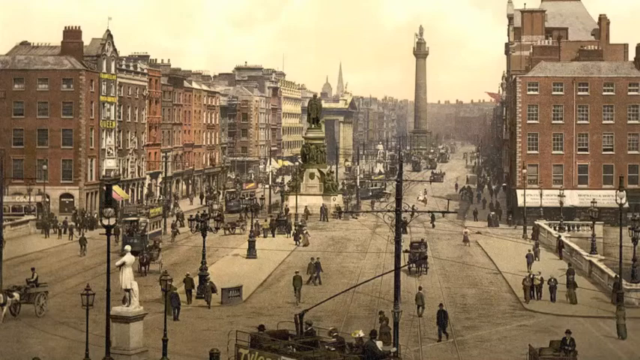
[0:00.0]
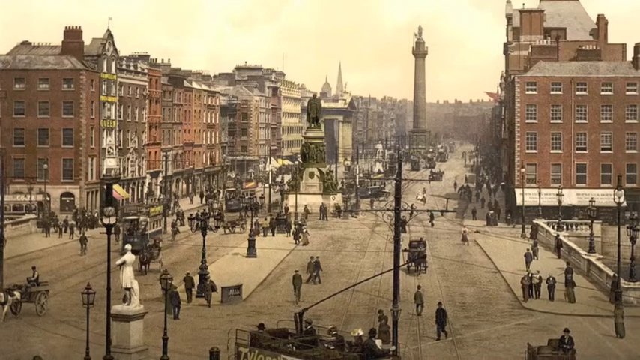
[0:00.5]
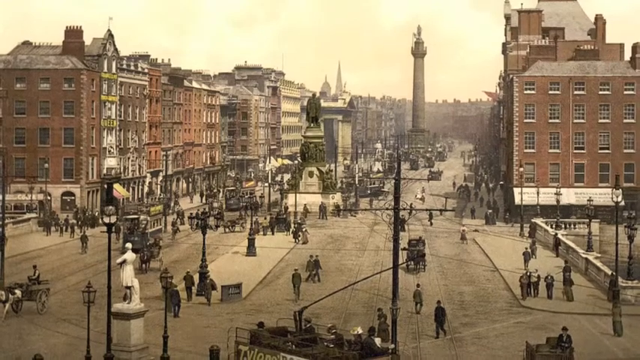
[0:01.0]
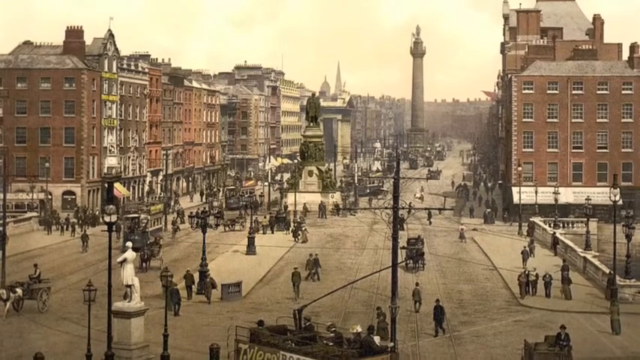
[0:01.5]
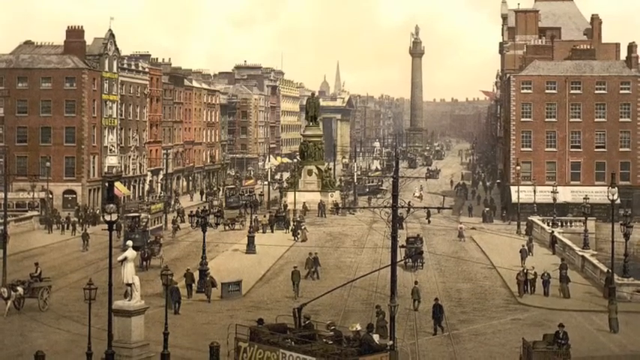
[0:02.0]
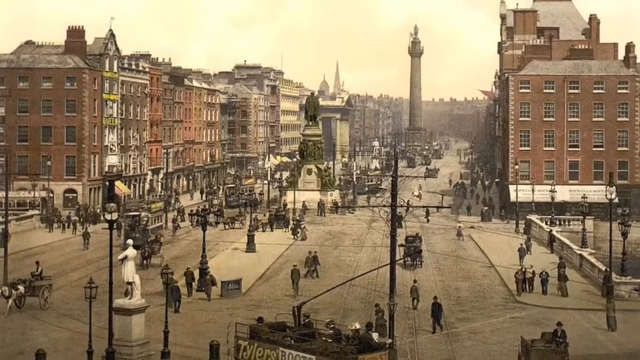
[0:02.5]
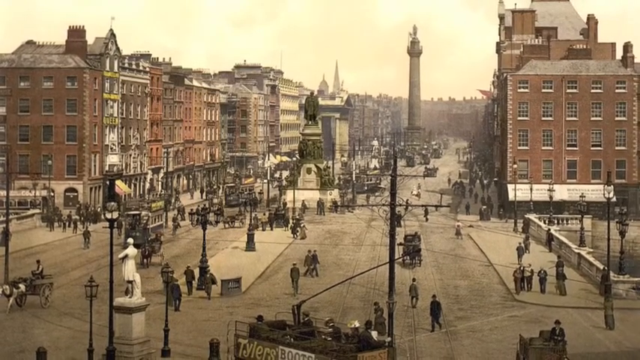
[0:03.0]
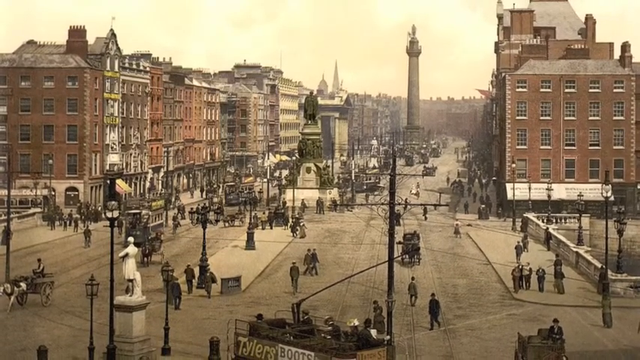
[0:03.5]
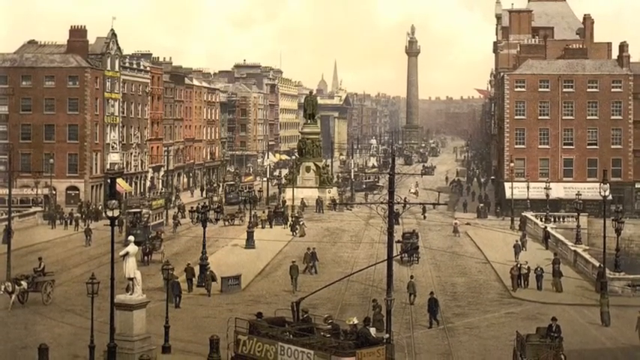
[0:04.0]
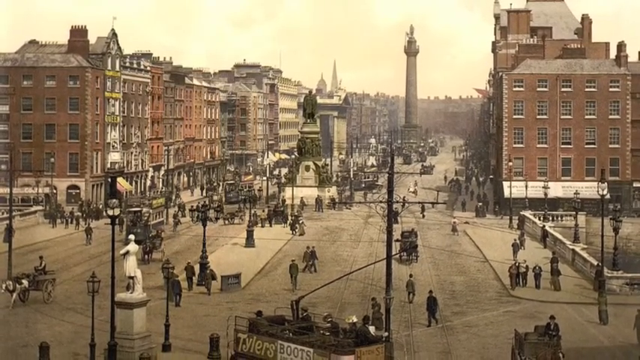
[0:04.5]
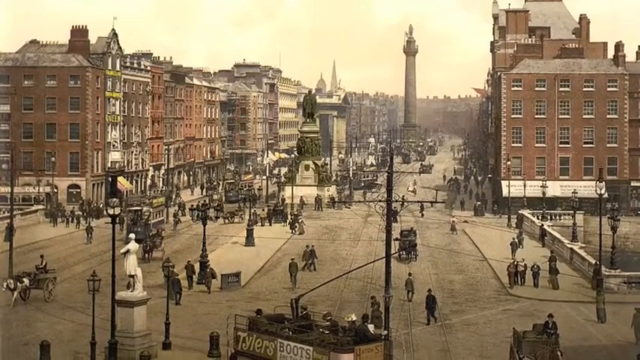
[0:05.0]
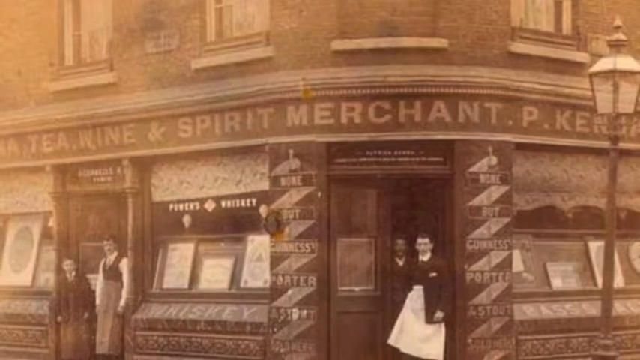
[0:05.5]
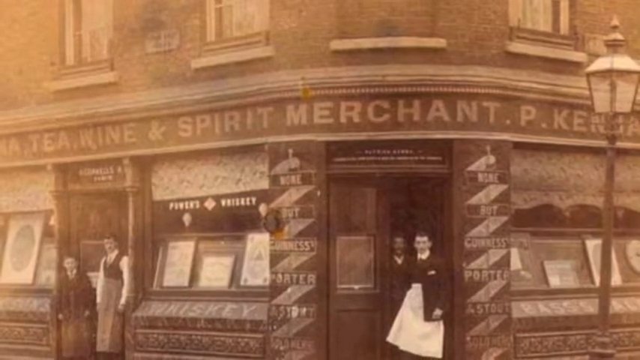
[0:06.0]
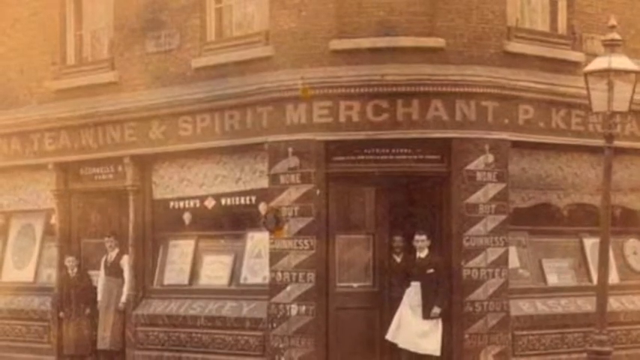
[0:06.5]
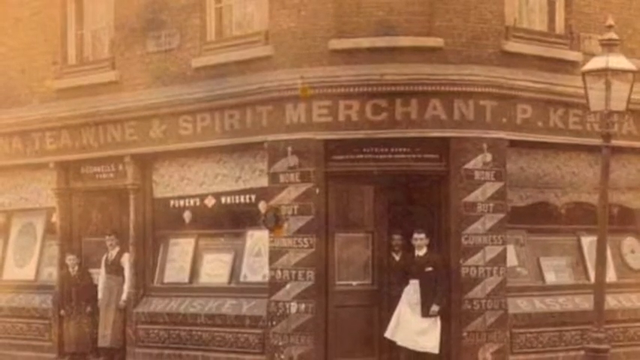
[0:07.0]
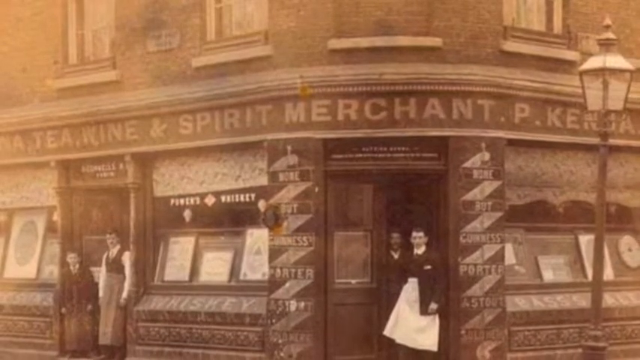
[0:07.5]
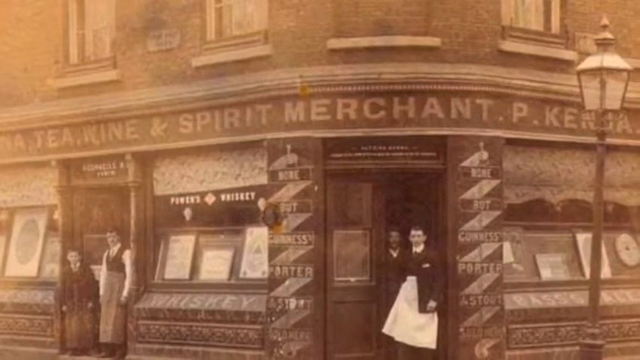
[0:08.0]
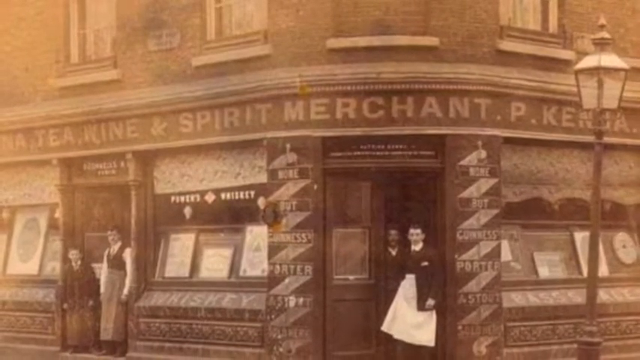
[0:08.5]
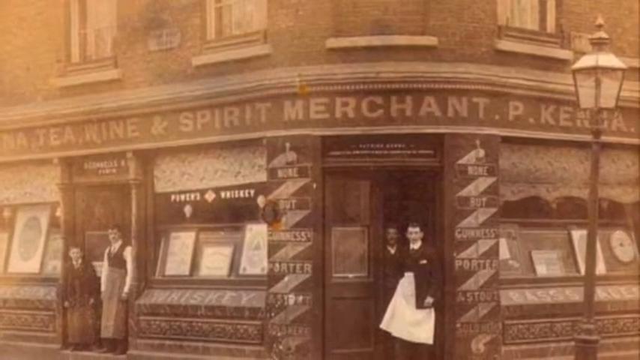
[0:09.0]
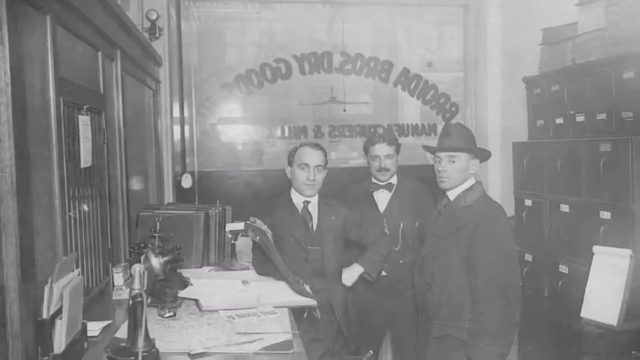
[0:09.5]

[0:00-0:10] An old footage shows a very large, older city with large streets and statues. A tea, wine, and spirits merchant is visible. A couple of men stand posing for a picture; they wear either ties or bow ties. They stand in front of a company window whose words appear backwards, since the men are inside the building and the advertisement is on the outside. Horses and buggies are visible, many people walk on very wide sidewalks, and tall brick buildings stand in the background.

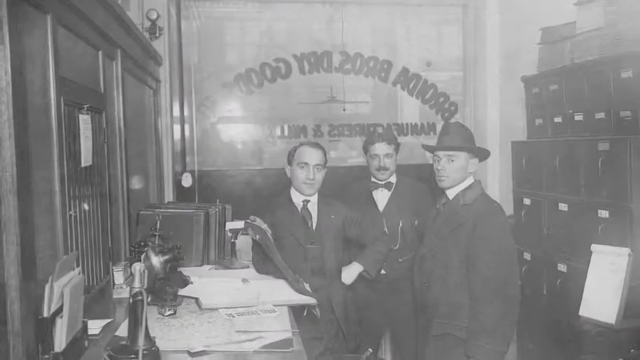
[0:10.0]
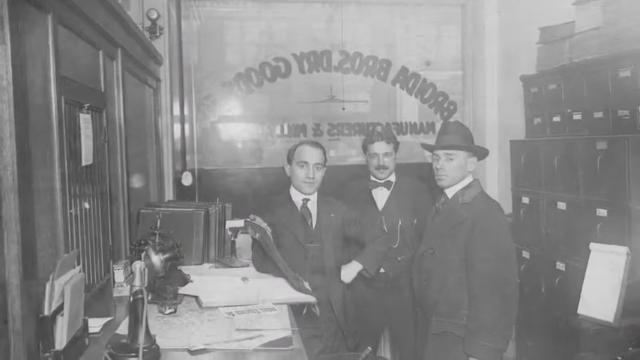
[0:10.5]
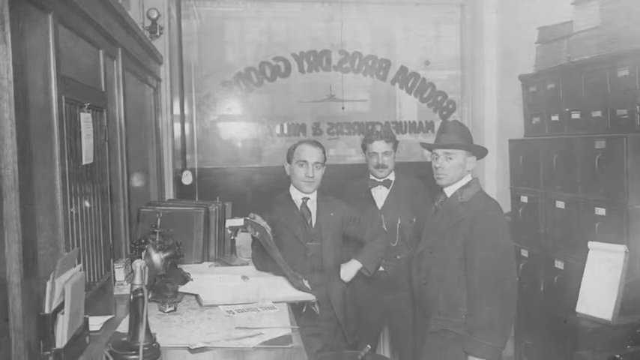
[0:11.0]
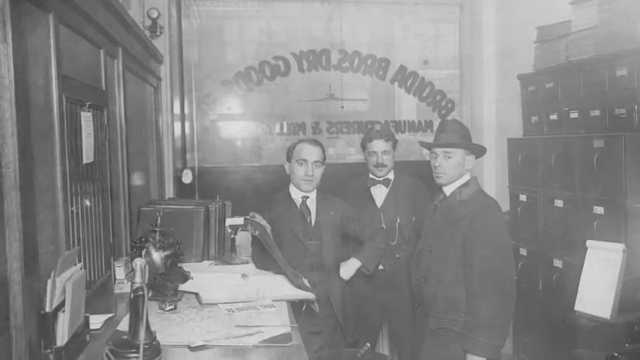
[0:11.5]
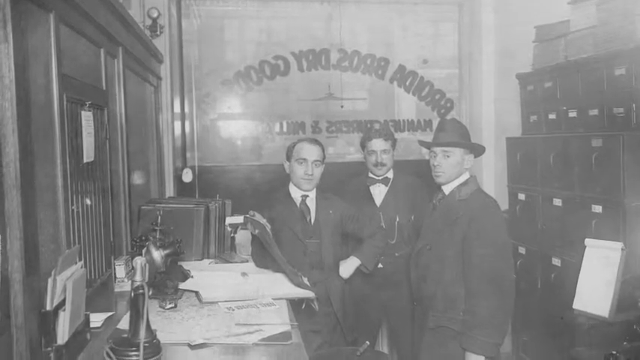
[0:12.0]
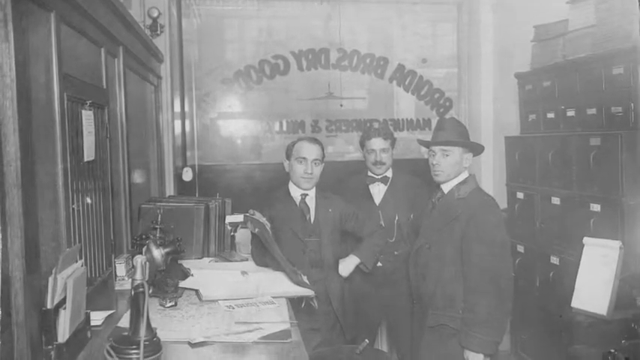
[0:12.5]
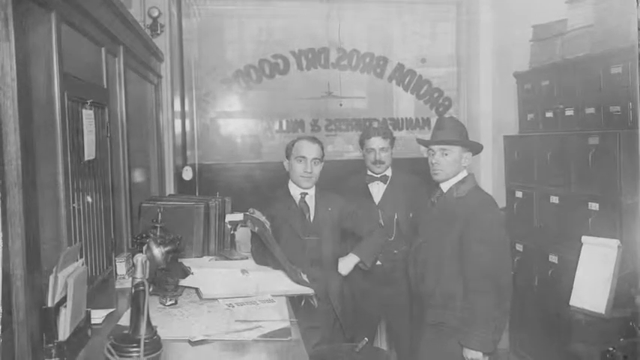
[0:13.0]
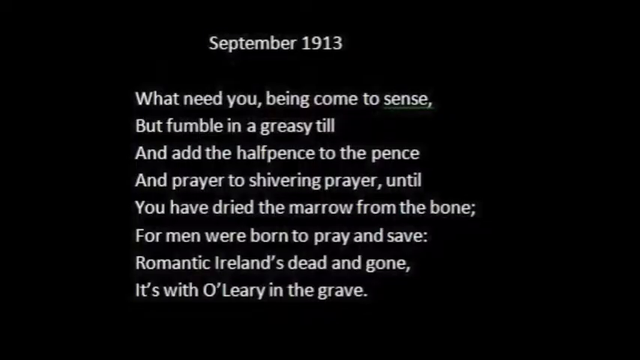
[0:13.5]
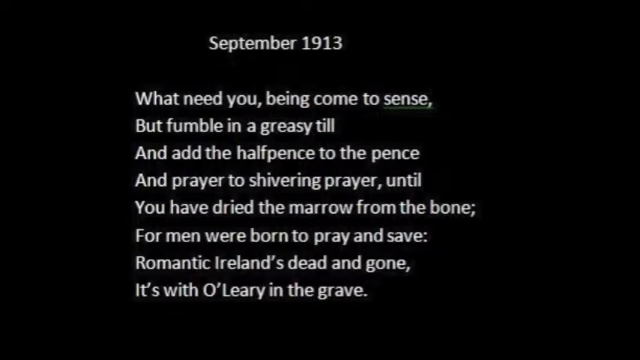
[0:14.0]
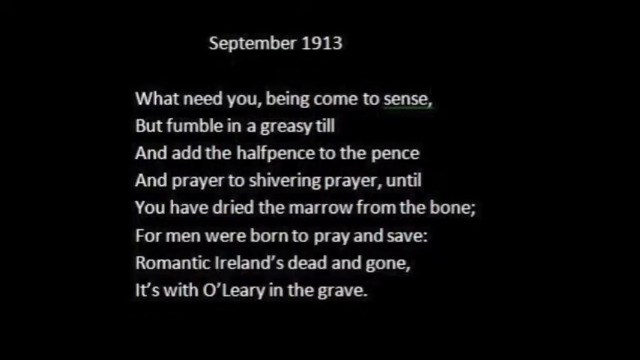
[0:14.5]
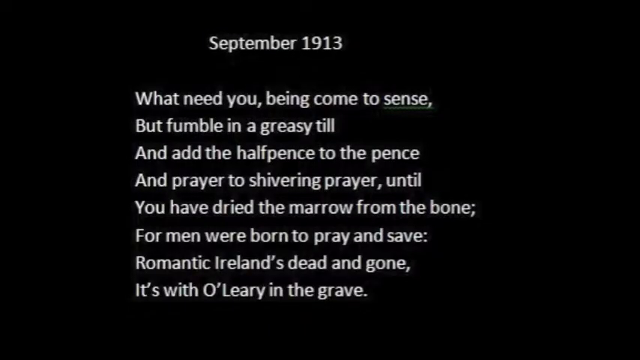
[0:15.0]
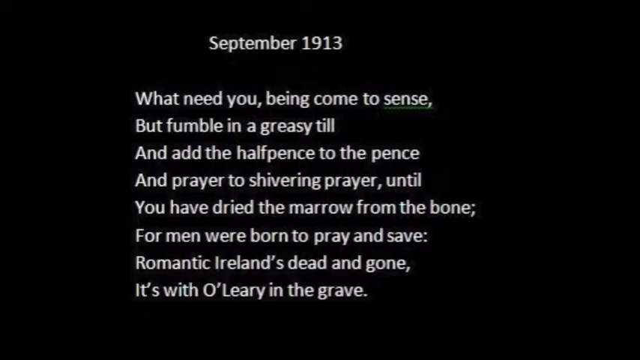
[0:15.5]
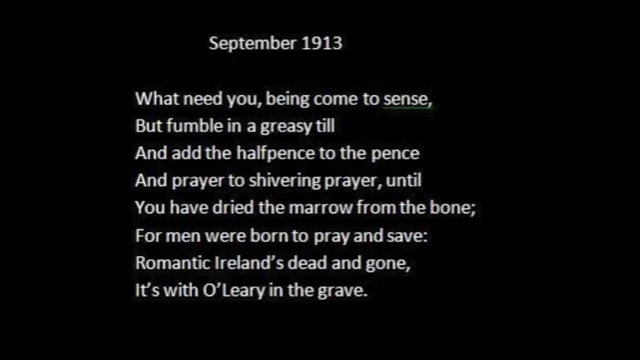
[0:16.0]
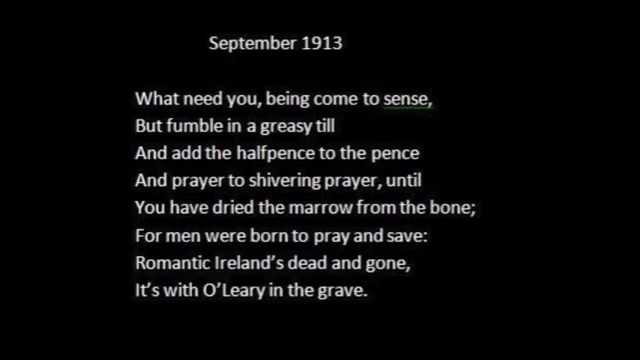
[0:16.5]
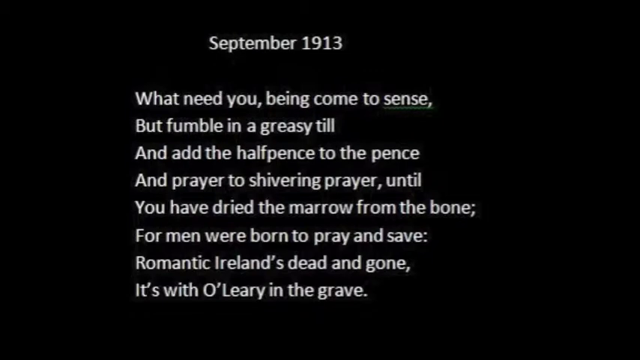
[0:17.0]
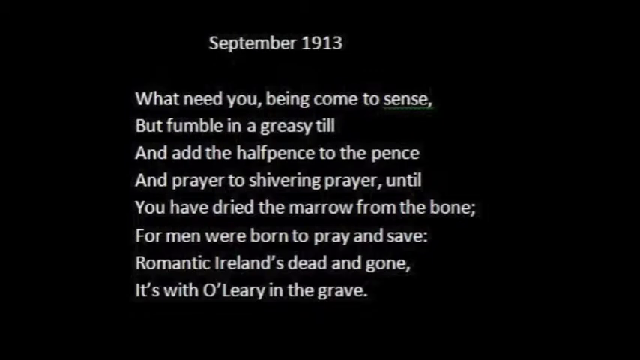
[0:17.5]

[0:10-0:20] Three men are shown. The one on the left wears a suit and a tie and has dark black hair. The man to his right has a bushy mustache, a dark bow tie and a pocket watch. The man on the far right wears what looks like a black cowboy hat and what looks like a winter coat over a dress shirt, with filing cabinets in the background behind him. Then white text appears on a black background, reading: "September 1913 What need you being come to sense but fumble in a greasy till and add the half pence to the pence and prayer to shivering prayer until you have dried the marrow from the bone for men were born to pray and save Romantic Ireland's dead and gone. It's with O'Leary in the grave".